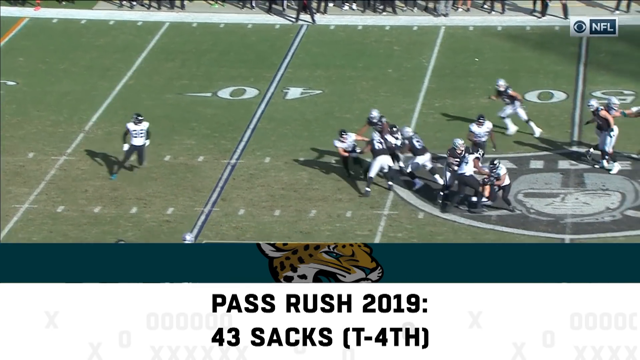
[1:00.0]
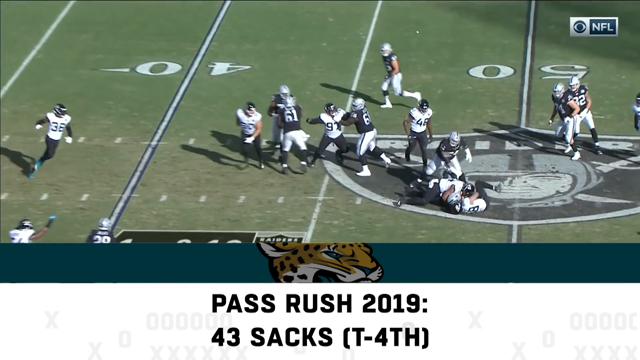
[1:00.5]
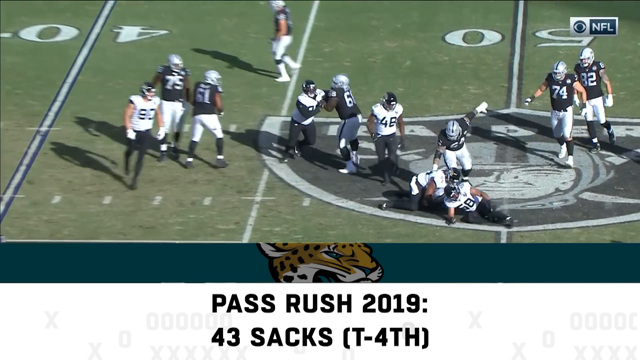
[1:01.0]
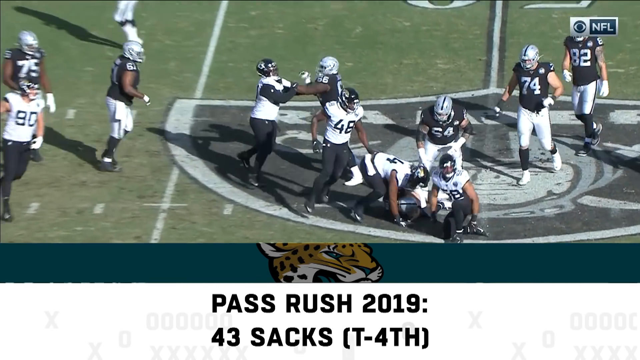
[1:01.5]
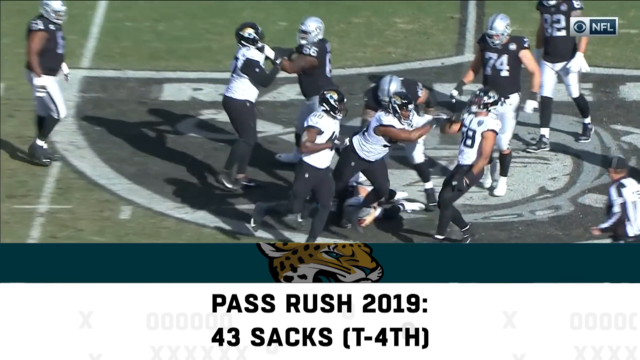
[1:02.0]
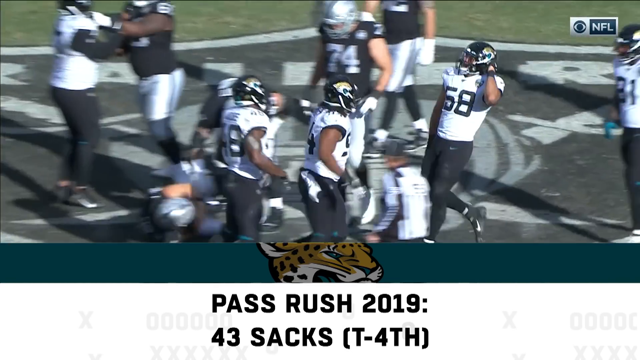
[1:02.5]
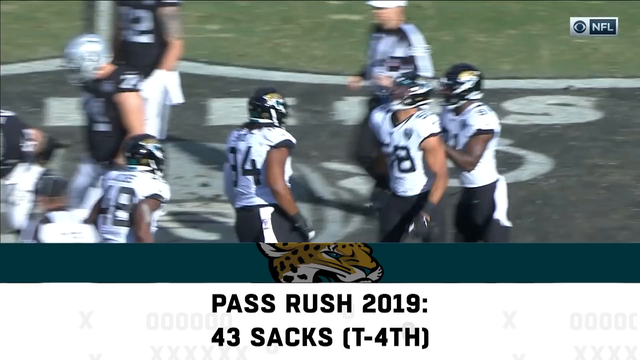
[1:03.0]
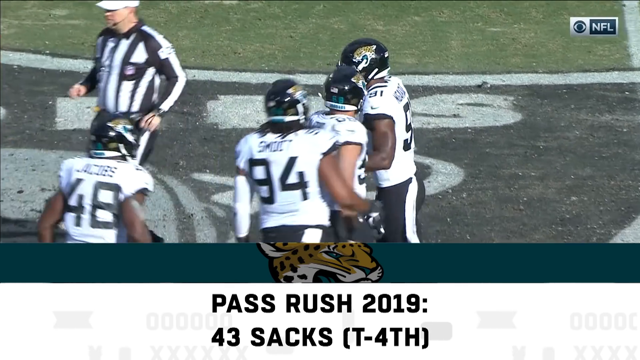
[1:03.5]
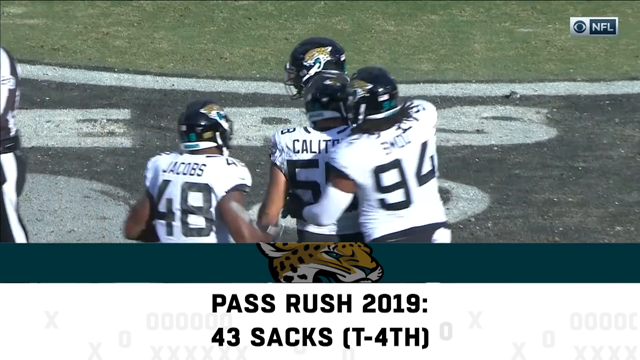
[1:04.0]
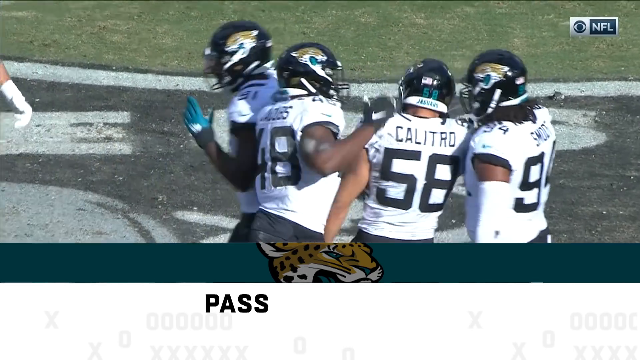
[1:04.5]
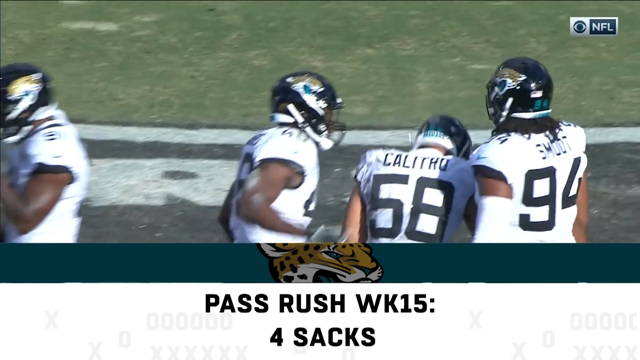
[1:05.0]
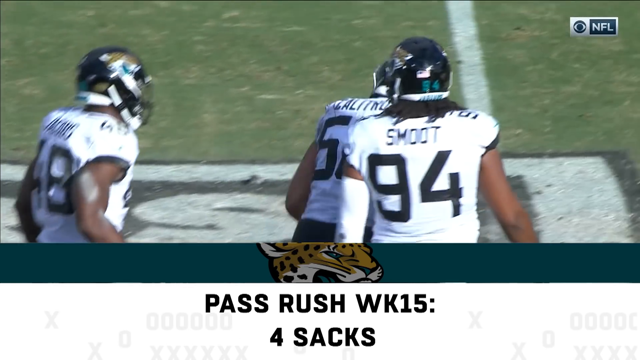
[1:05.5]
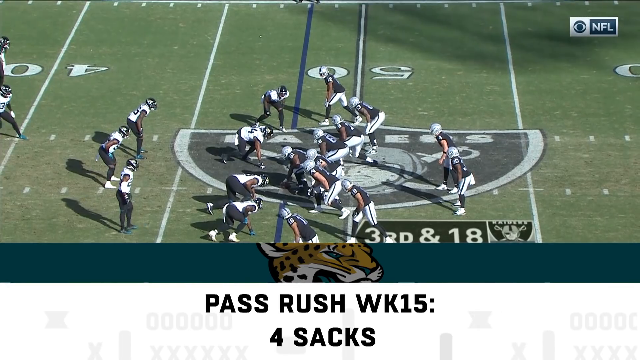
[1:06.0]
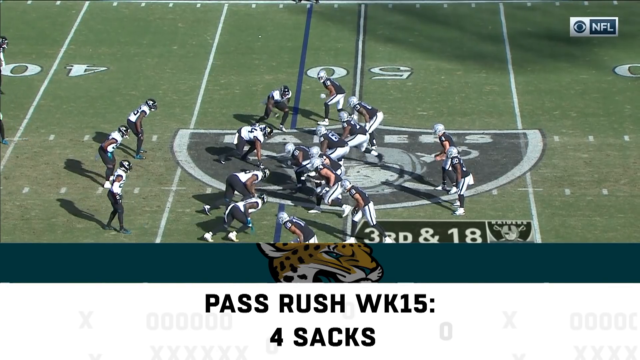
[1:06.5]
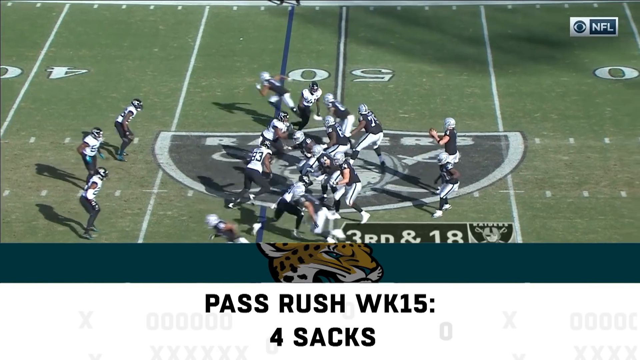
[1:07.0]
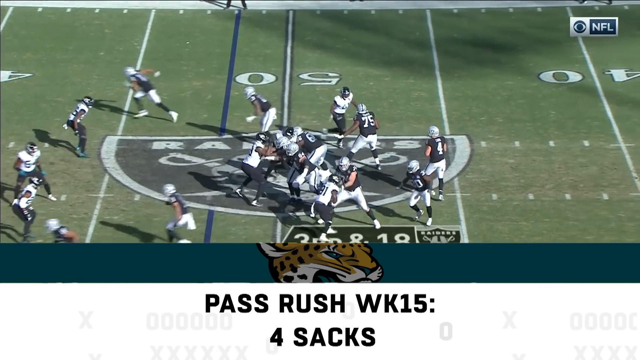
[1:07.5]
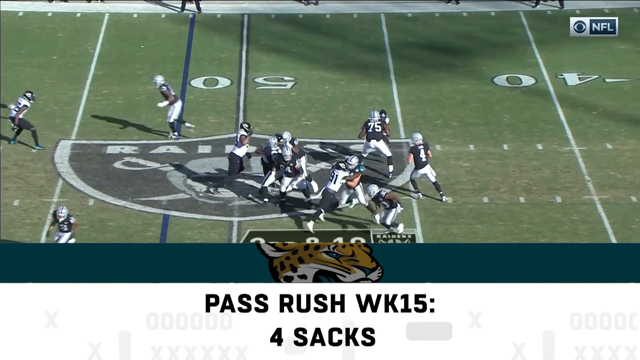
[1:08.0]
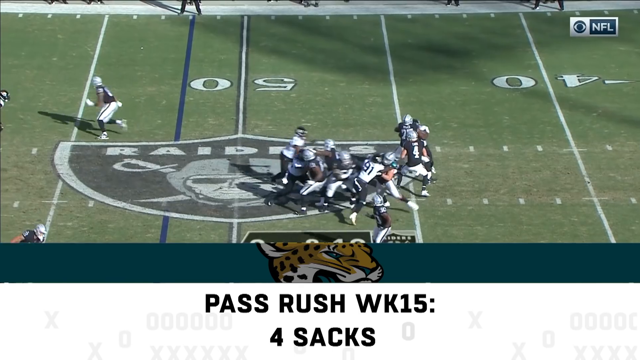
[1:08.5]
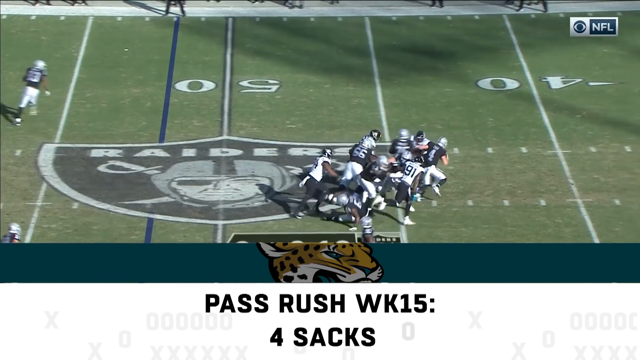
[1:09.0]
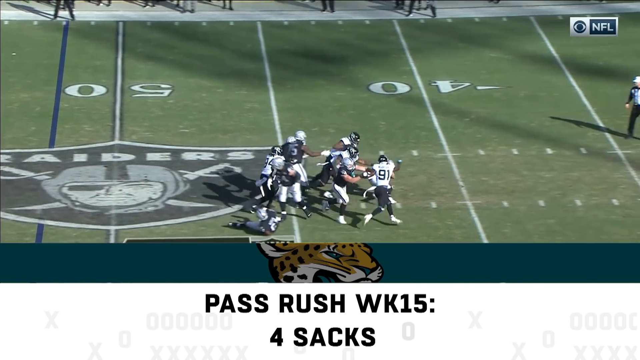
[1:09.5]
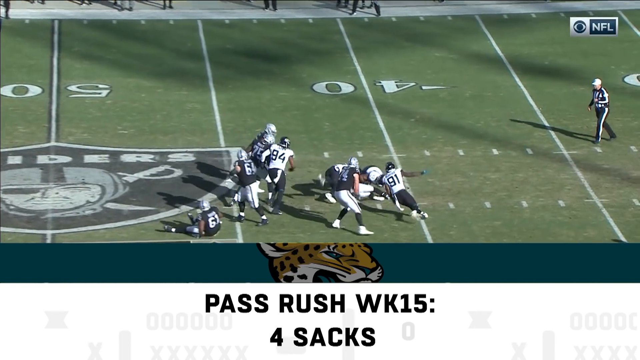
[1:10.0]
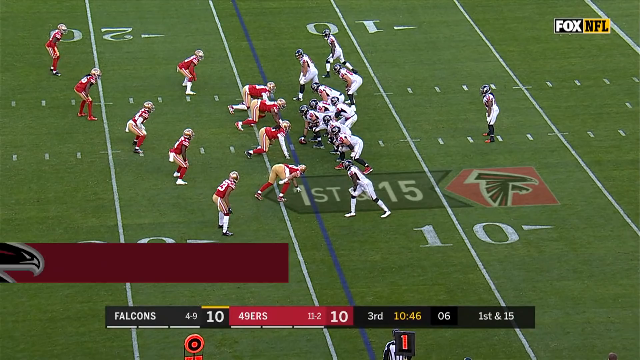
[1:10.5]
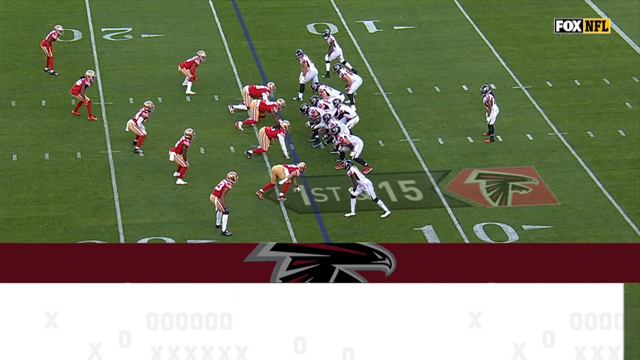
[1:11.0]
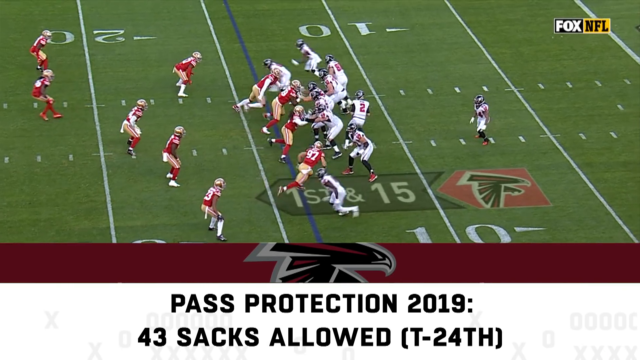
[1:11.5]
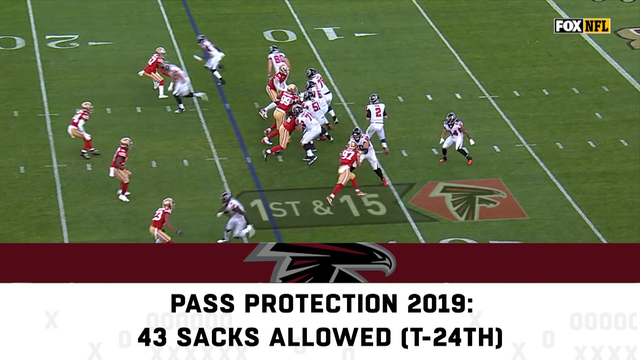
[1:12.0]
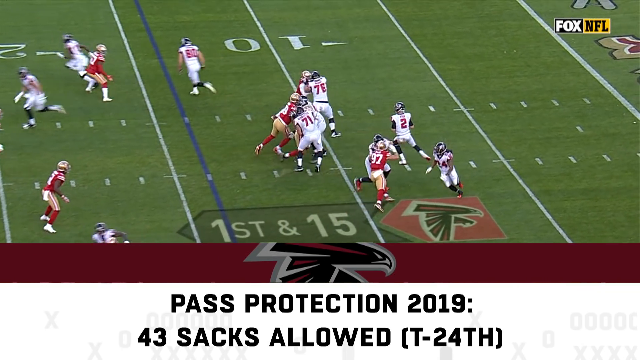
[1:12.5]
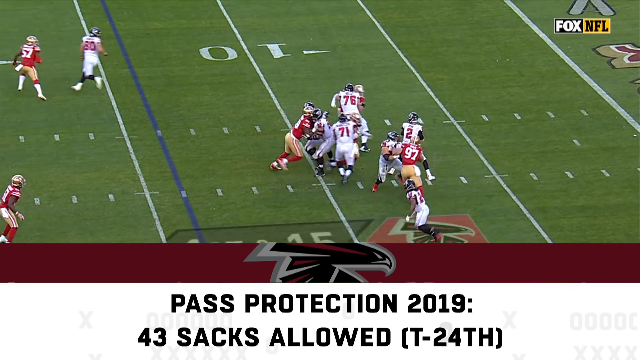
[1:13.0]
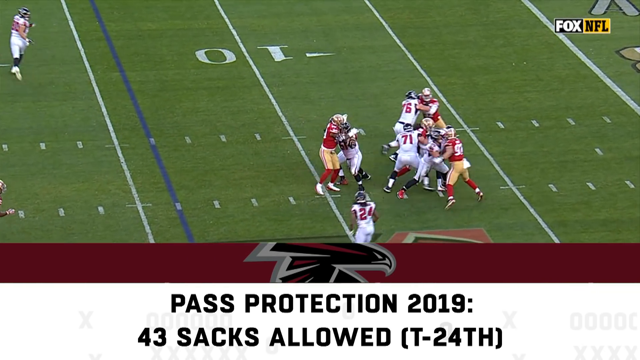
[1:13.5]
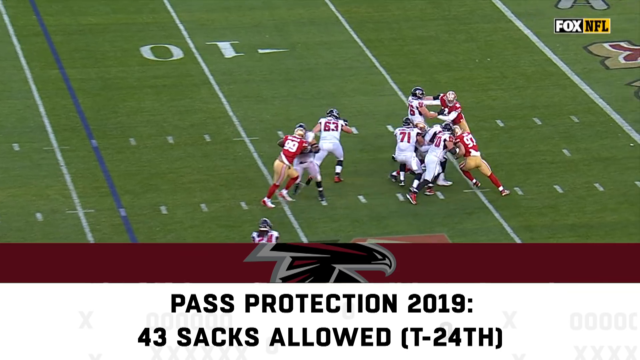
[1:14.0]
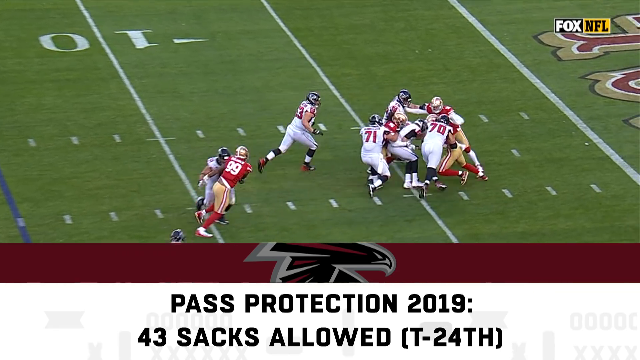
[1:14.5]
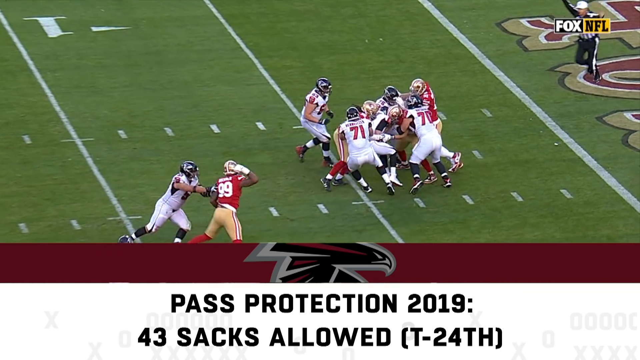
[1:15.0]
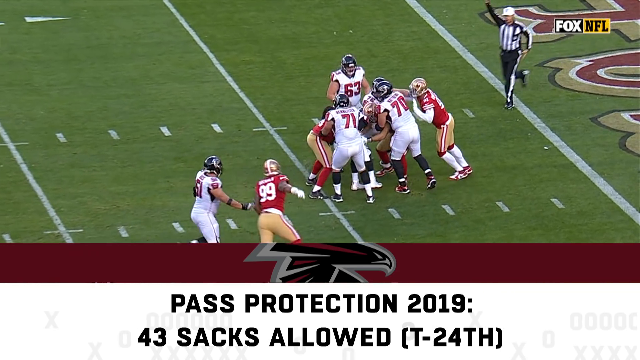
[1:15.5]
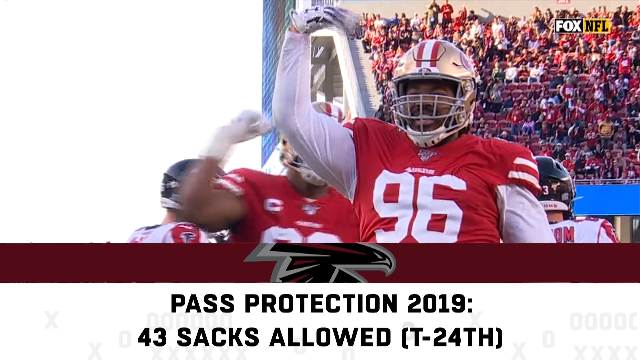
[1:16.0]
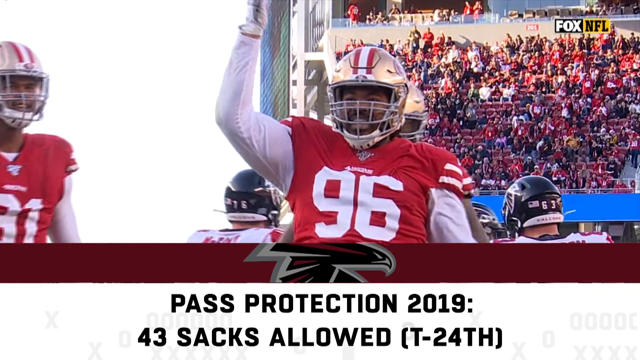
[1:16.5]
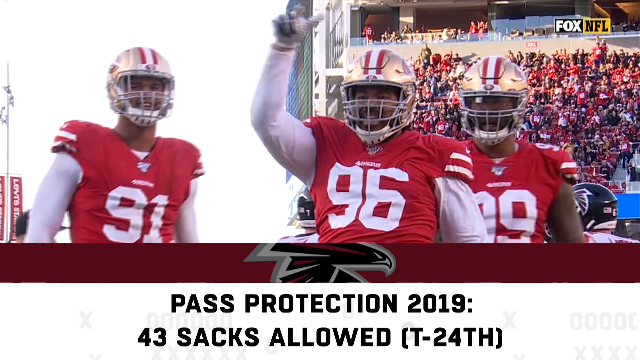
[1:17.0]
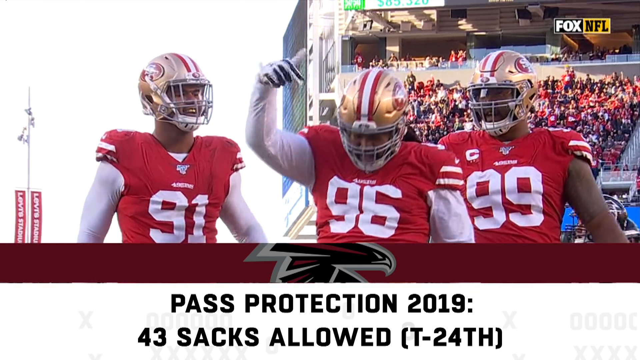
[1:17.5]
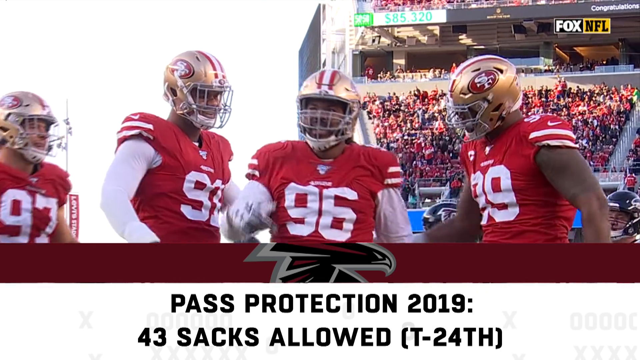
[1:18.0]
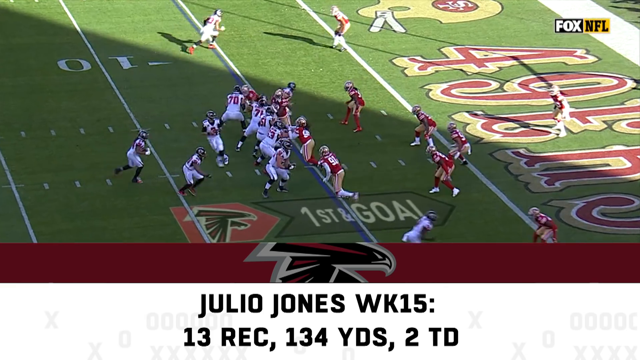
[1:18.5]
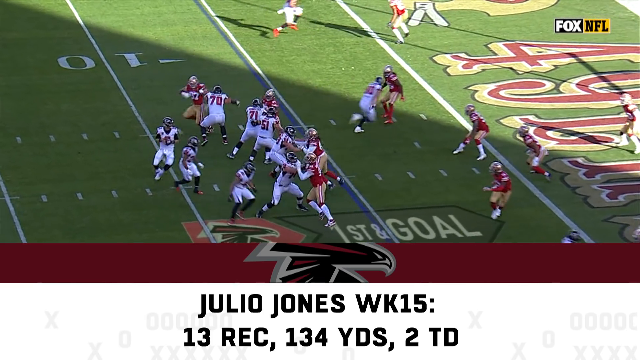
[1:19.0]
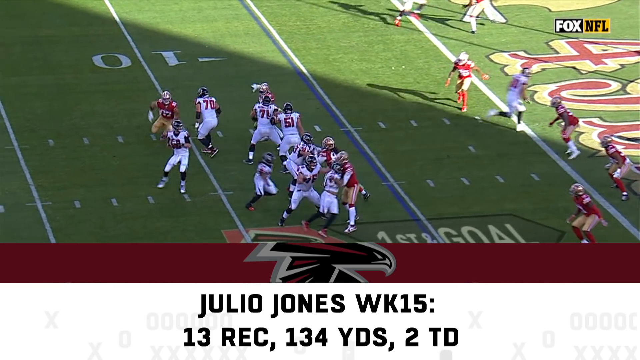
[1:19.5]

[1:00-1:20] In the Jacksonville Jaguars and Oakland Raiders game, Jacksonville players celebrate. The 49ers completely surround the opposing quarterback and take him down for a sack. The Raiders quarterback, number four, drops back about five yards to pass, a pass rush comes on, he holds the ball too long, his protection collapses and he goes down. In the Falcons-49ers game, two players tackle the Falcons quarterback, and although he stays on his feet the officials call it a sack, a big loss of yards.